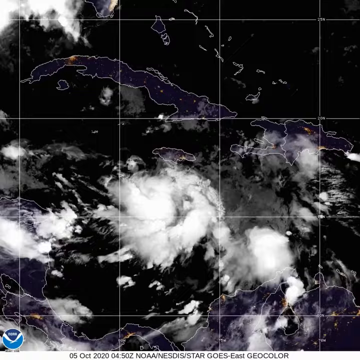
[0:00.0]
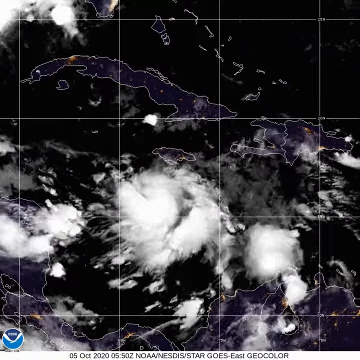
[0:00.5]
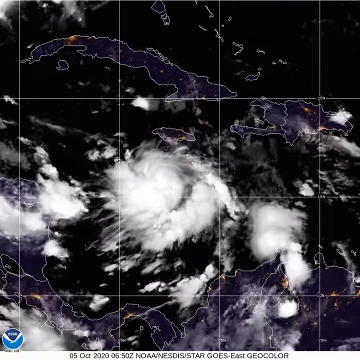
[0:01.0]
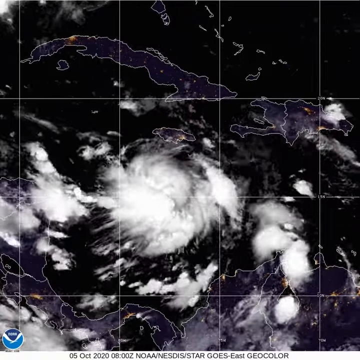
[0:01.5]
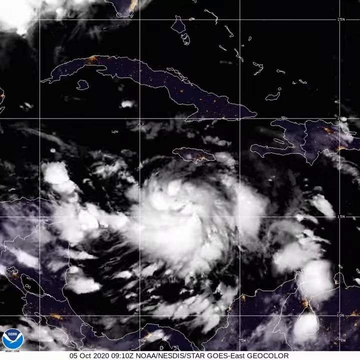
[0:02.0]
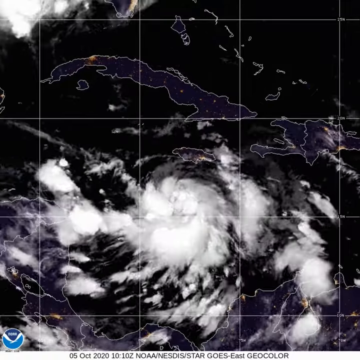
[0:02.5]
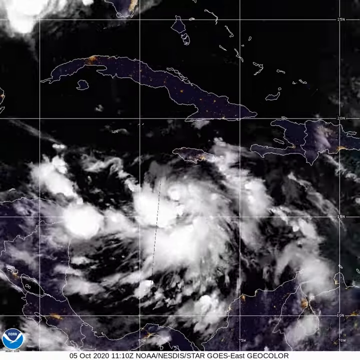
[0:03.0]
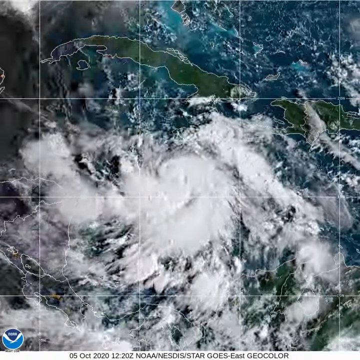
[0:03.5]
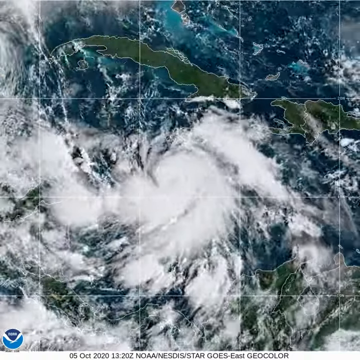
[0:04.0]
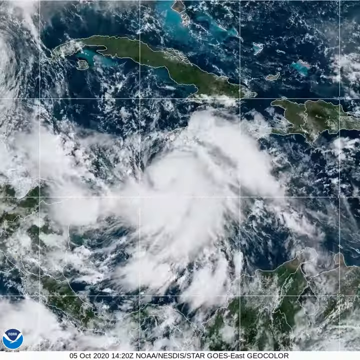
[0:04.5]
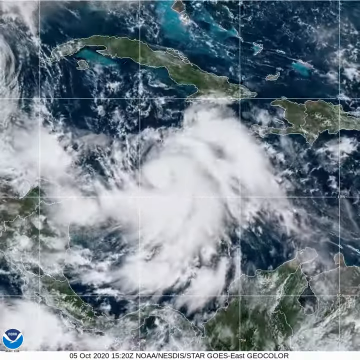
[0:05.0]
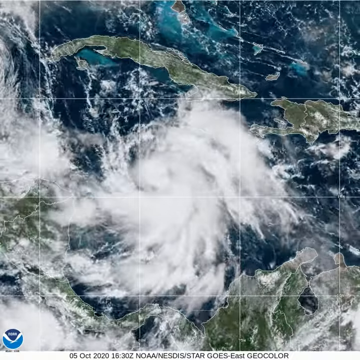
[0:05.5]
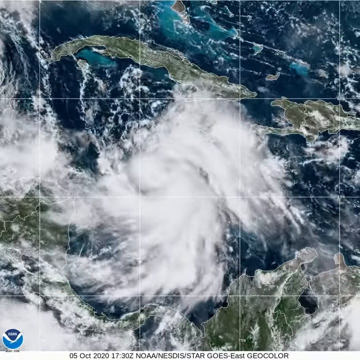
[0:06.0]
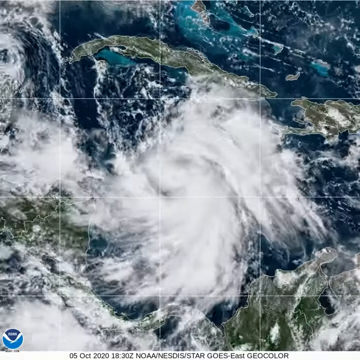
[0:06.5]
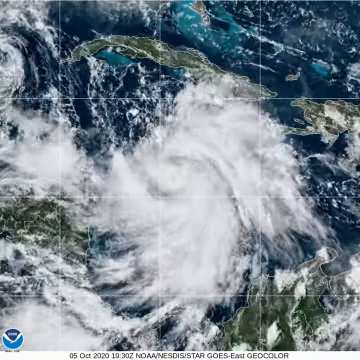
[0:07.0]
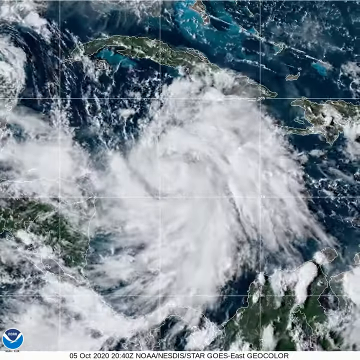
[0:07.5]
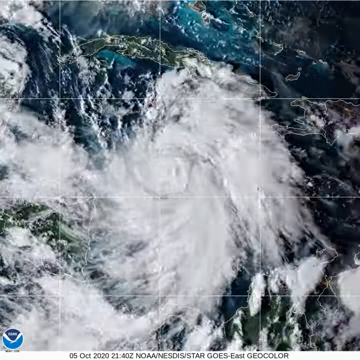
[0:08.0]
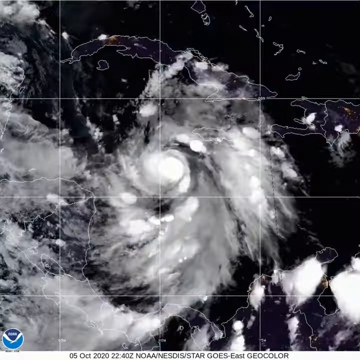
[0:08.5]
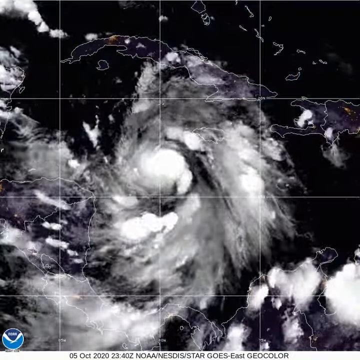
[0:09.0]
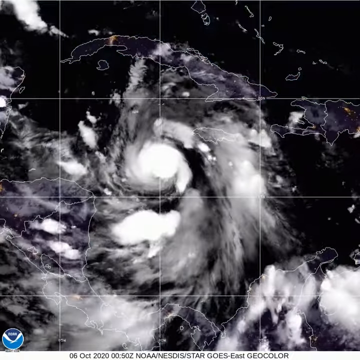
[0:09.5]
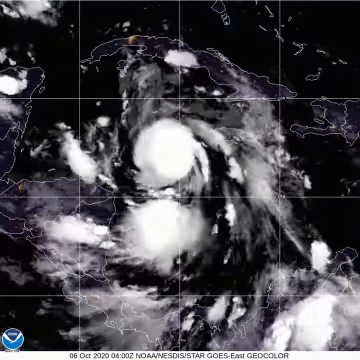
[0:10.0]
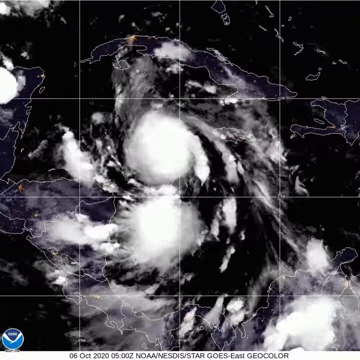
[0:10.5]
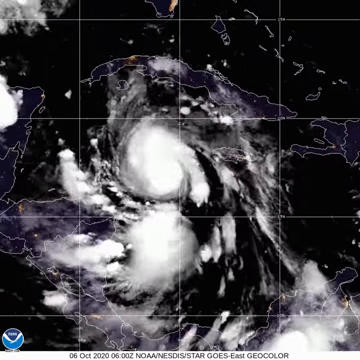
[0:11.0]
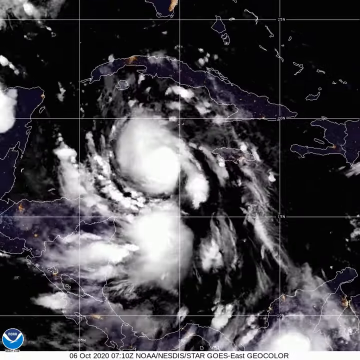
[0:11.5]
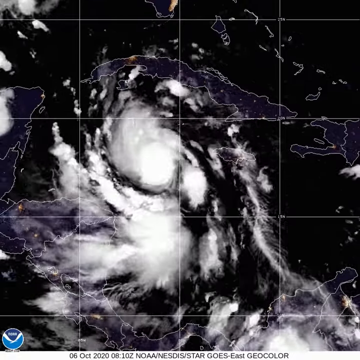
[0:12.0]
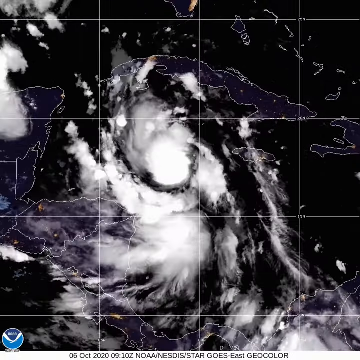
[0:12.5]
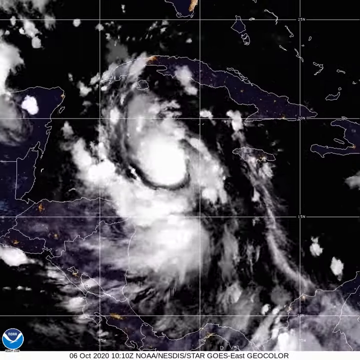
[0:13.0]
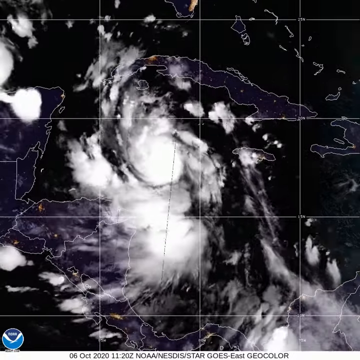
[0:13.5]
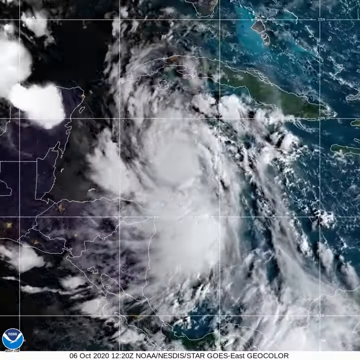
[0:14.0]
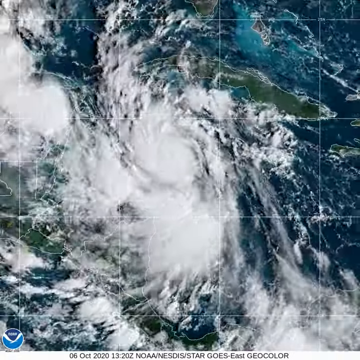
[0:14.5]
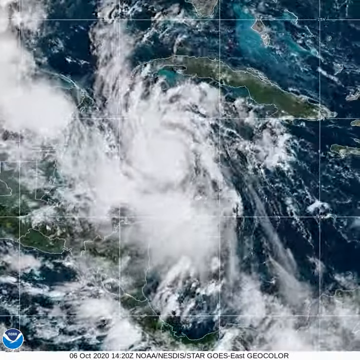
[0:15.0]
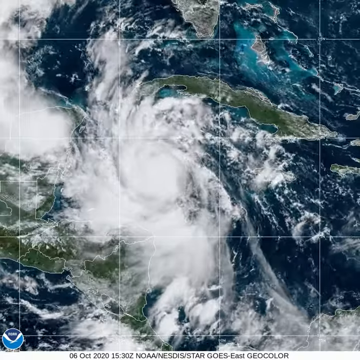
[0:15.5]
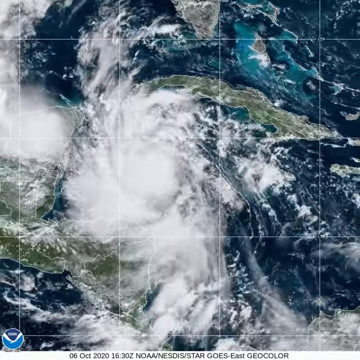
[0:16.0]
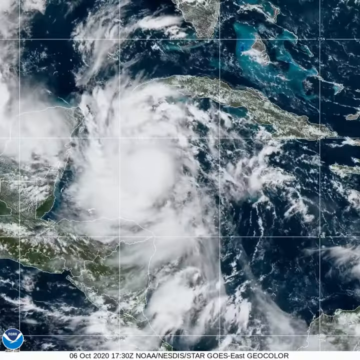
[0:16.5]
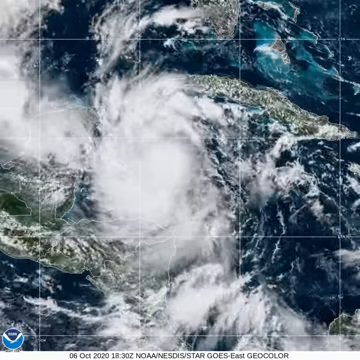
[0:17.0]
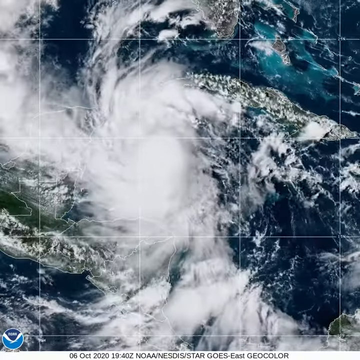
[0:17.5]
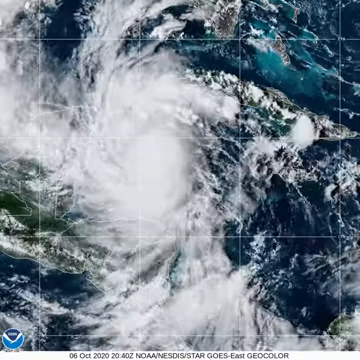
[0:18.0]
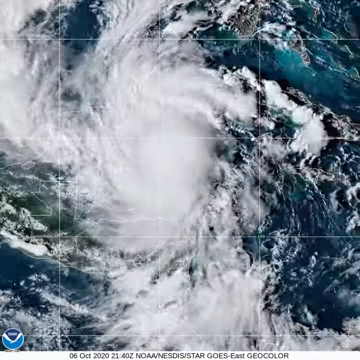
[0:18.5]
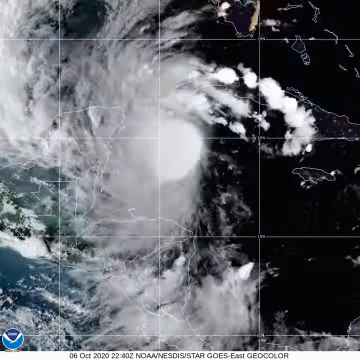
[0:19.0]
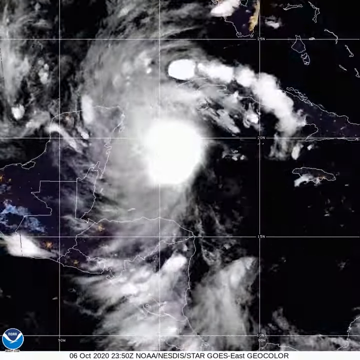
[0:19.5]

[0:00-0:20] The video shows weather patterns over the ocean and an island chain of small and large islands, as well as an adjacent continent. The islands and water appear in black and white, with the landforms outlined in white. Cloud formations are visible above all the landforms, bubbling, growing and also dissipating, showing the weather appearing over certain spots in the ocean and over land. The imagery transitions from black and white to aerial photographs in color. Winds carry the clouds from the southeast toward the northwest, and a storm builds with a rotation pattern forming over the water, possibly forming a hurricane or tropical storm. The storm grows larger as another section of cloud begins to combine with it.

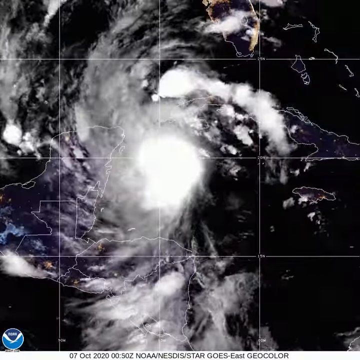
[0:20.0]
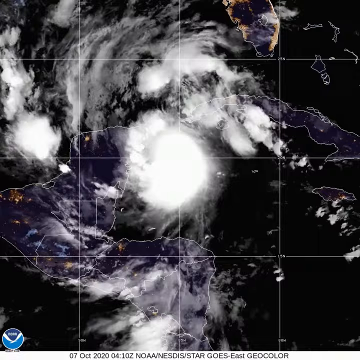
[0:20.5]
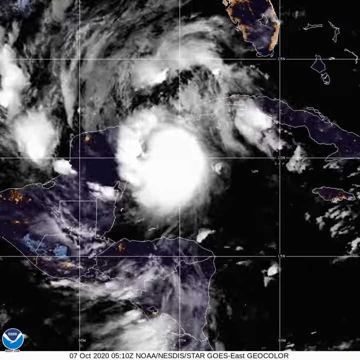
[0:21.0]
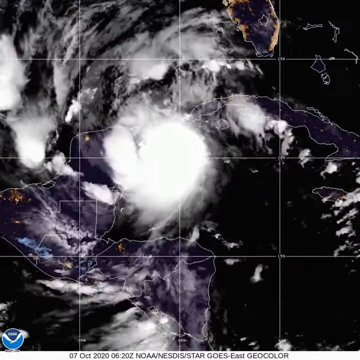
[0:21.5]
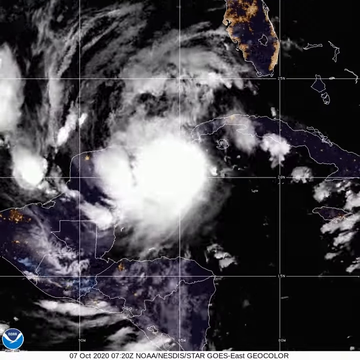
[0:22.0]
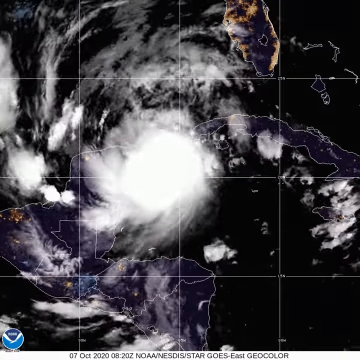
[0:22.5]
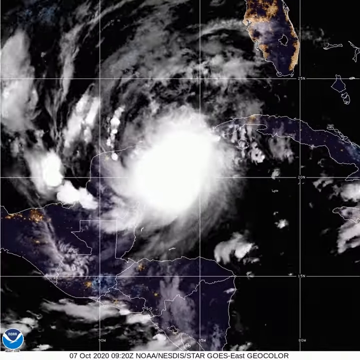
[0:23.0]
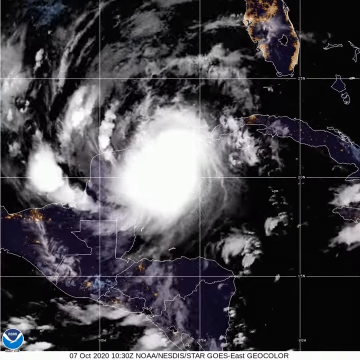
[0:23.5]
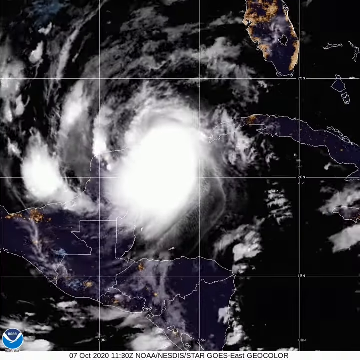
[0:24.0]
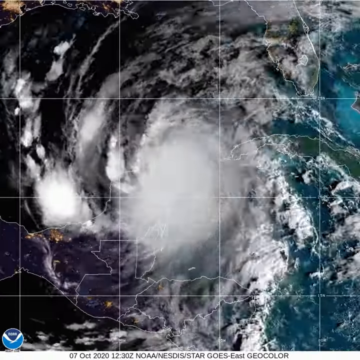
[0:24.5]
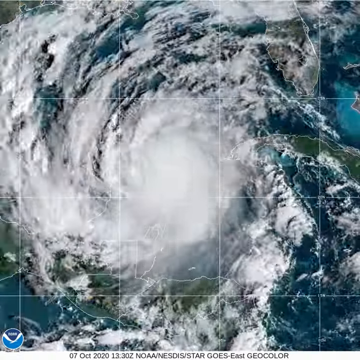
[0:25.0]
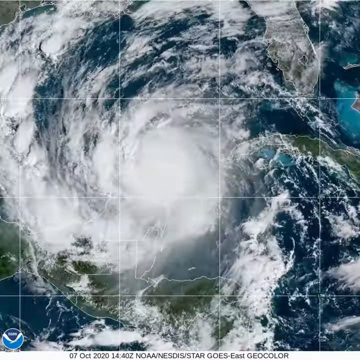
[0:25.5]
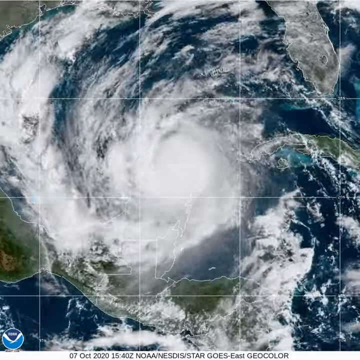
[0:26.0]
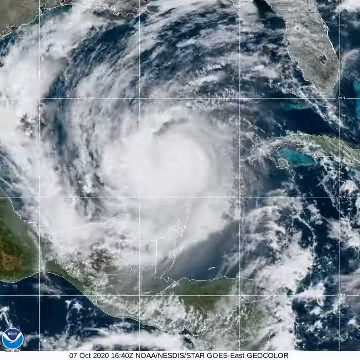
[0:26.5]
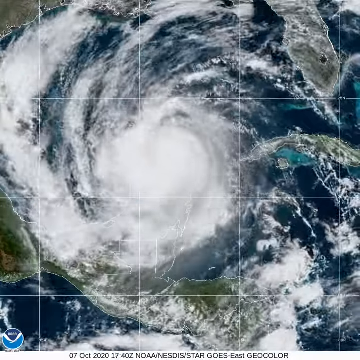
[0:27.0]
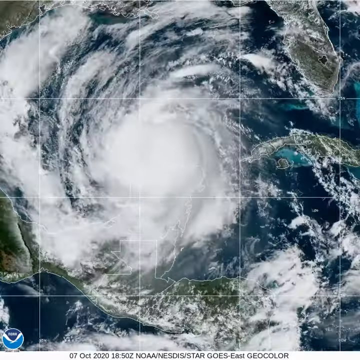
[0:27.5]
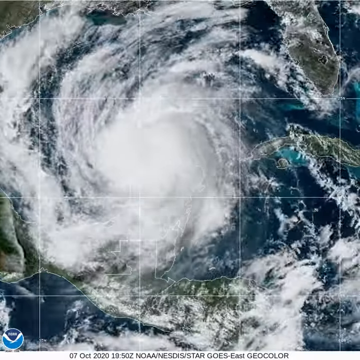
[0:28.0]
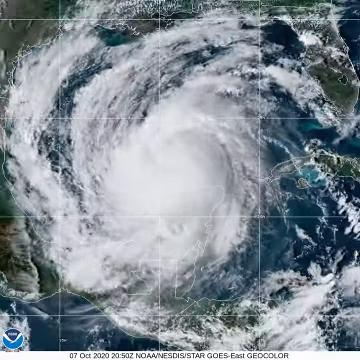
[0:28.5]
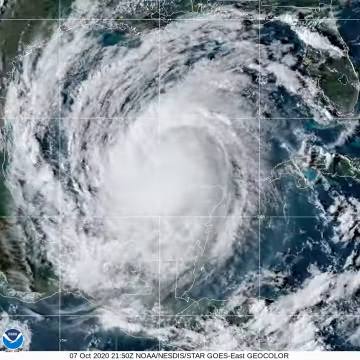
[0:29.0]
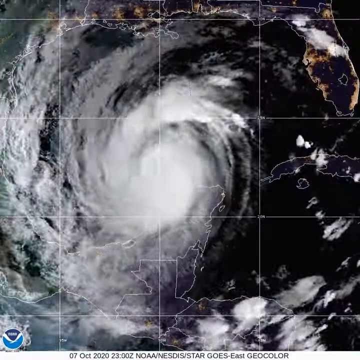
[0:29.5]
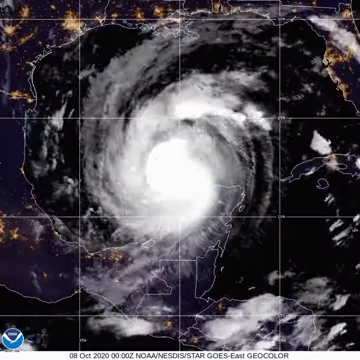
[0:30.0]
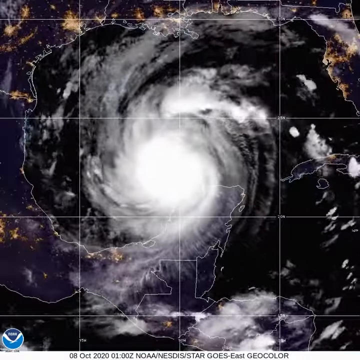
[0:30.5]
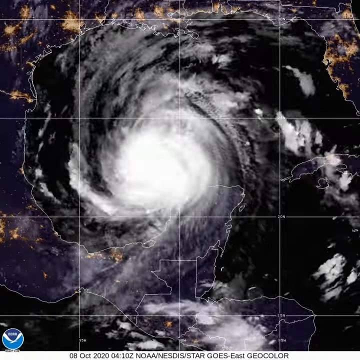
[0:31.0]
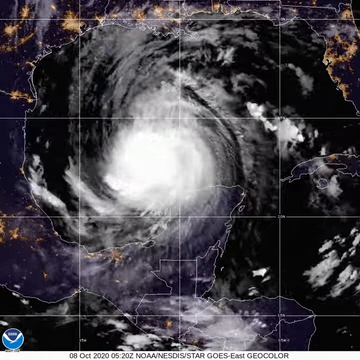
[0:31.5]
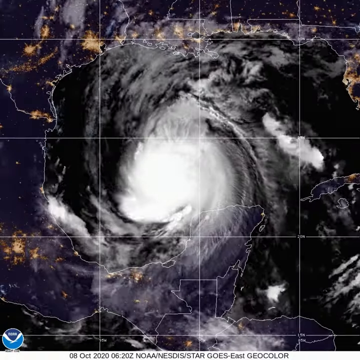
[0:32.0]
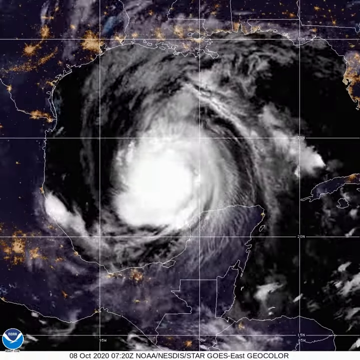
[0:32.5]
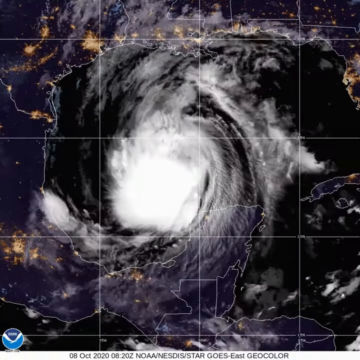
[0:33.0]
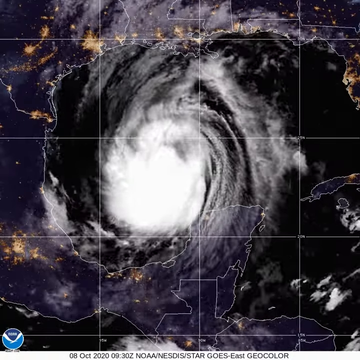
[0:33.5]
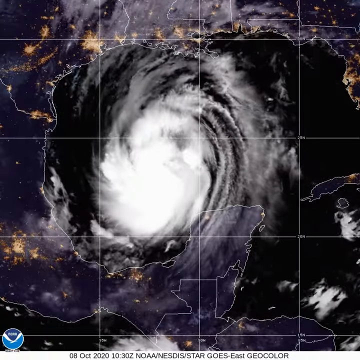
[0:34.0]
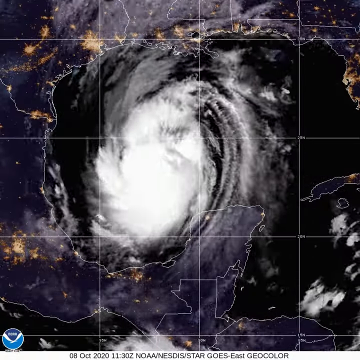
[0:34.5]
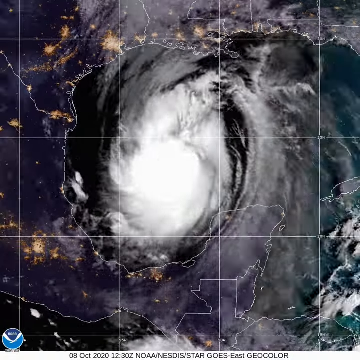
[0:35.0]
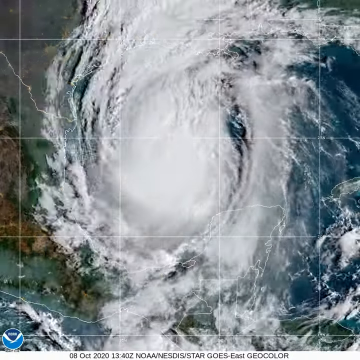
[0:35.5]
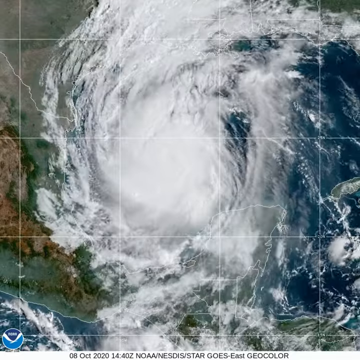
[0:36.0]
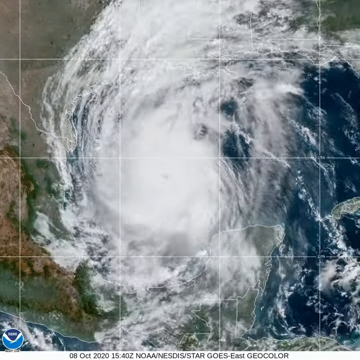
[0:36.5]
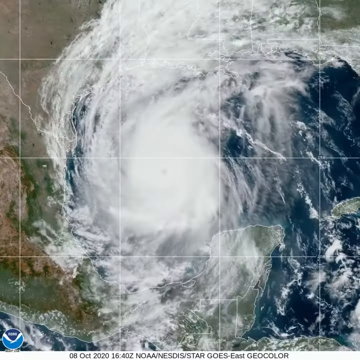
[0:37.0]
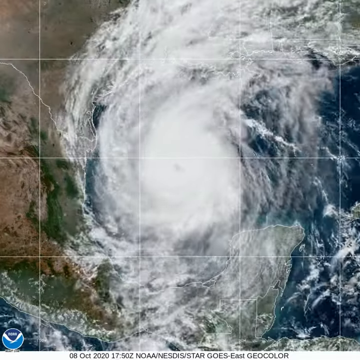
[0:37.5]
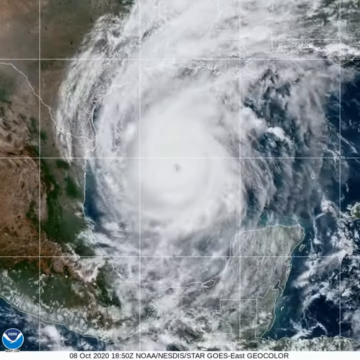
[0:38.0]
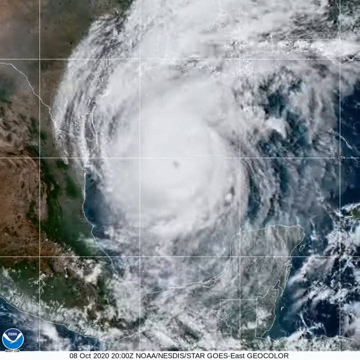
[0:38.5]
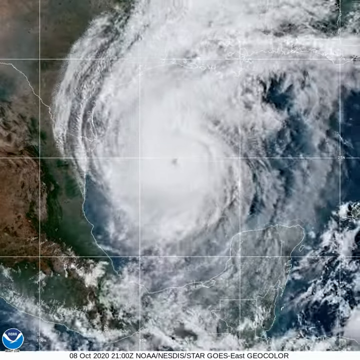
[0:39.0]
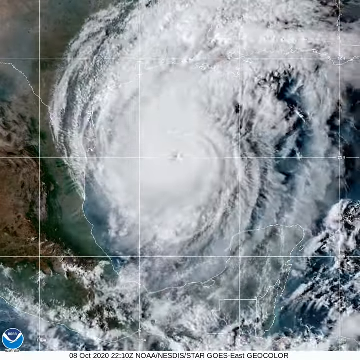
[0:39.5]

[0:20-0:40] Satellite weather imagery shows the Gulf of Mexico and the formation of a tropical storm or hurricane inside it. It begins with a weak storm formation of clouds rotating over the Caribbean Islands and Cuba, making its way northwest toward Texas and Mexico. The image shifts from a black-and-white nighttime view to a daytime view showing the color of the land and water below. The cloud formation grows larger and rotates faster and faster as it approaches land, its rotation building as it grows. Eventually an eye forms in the middle of the storm, indicating a hurricane has developed over the Gulf. The sequence ends with the edge of the hurricane making landfall in Texas and Mexico.